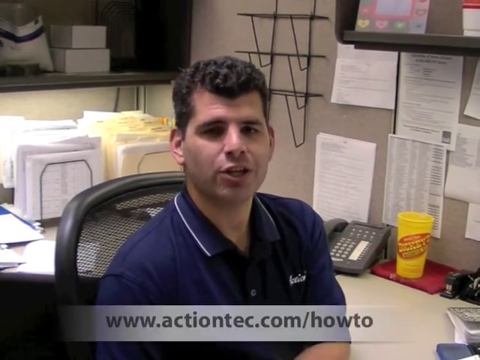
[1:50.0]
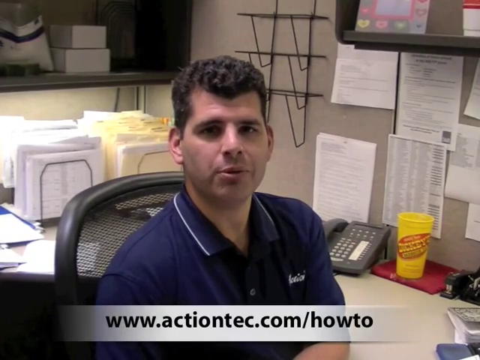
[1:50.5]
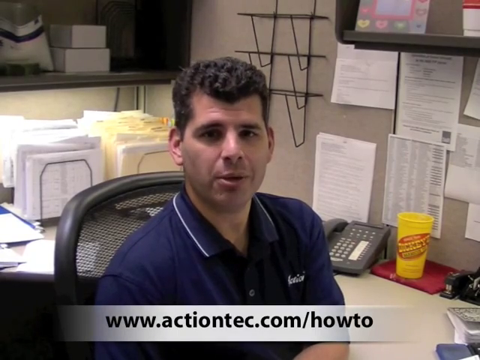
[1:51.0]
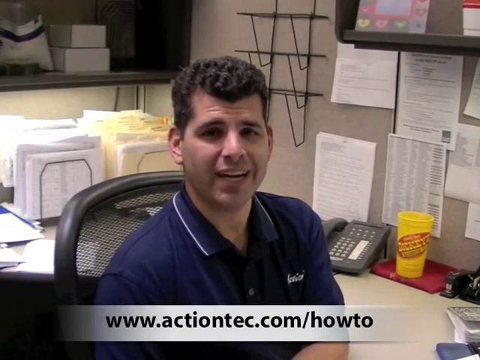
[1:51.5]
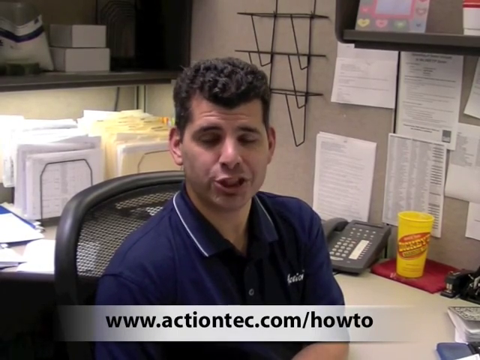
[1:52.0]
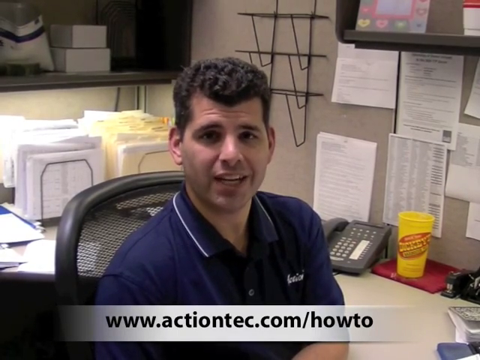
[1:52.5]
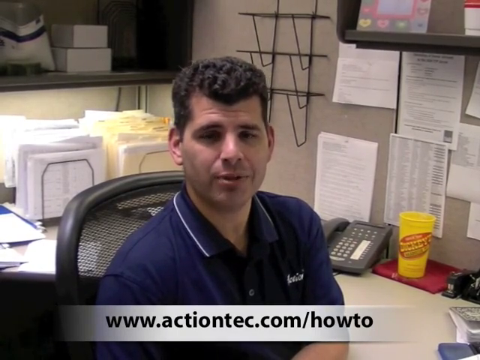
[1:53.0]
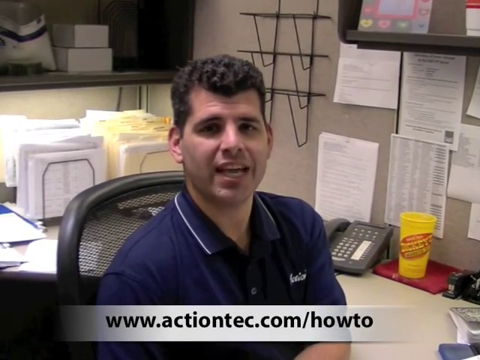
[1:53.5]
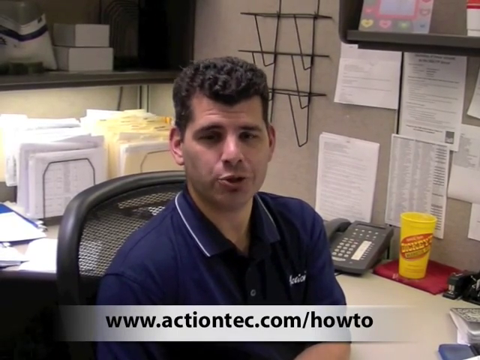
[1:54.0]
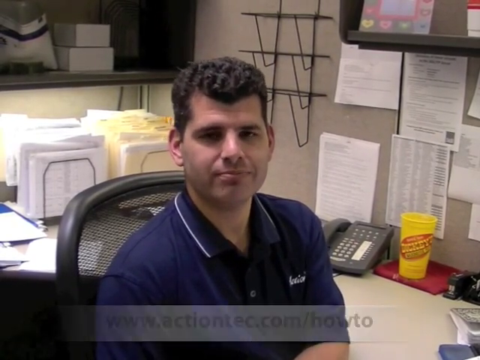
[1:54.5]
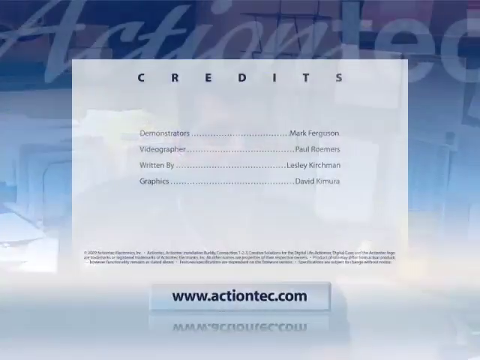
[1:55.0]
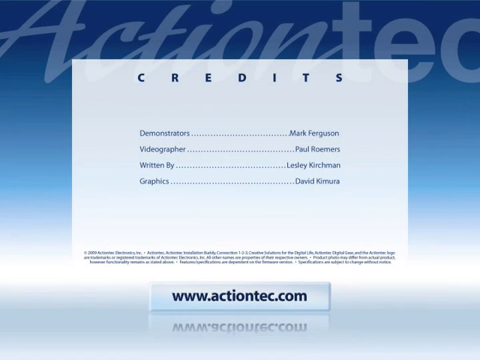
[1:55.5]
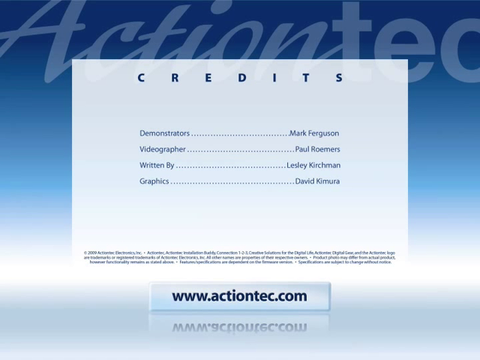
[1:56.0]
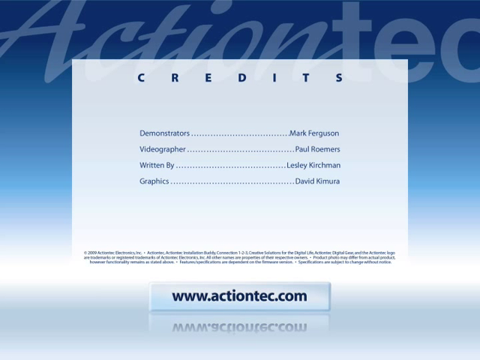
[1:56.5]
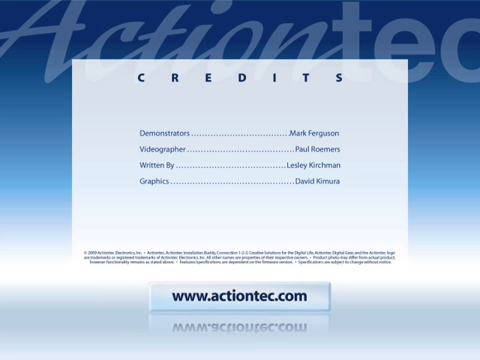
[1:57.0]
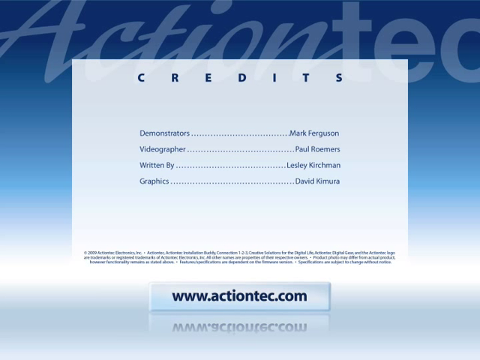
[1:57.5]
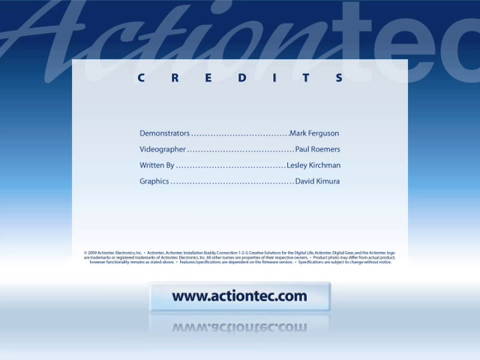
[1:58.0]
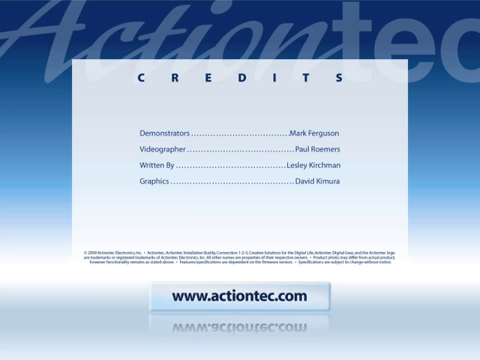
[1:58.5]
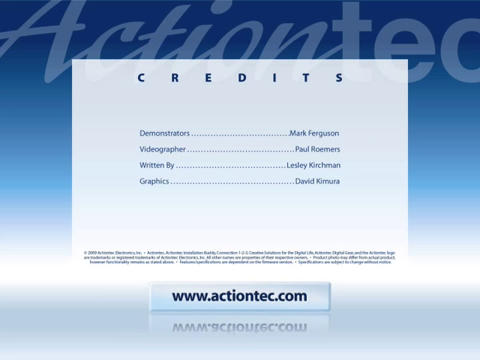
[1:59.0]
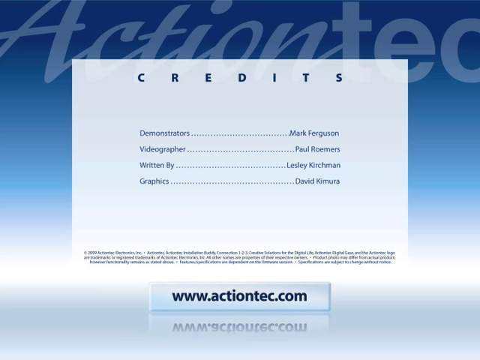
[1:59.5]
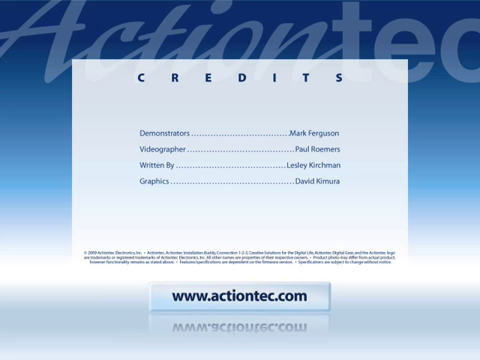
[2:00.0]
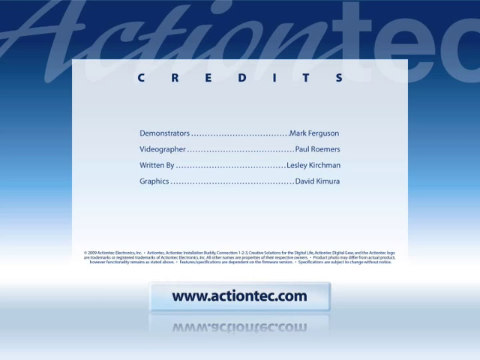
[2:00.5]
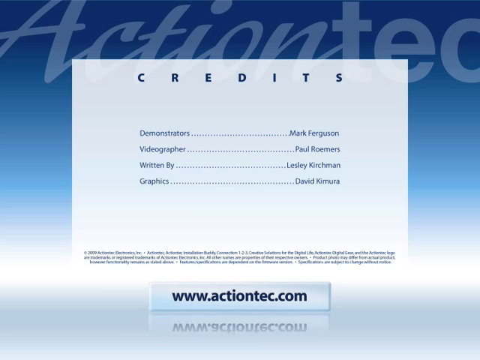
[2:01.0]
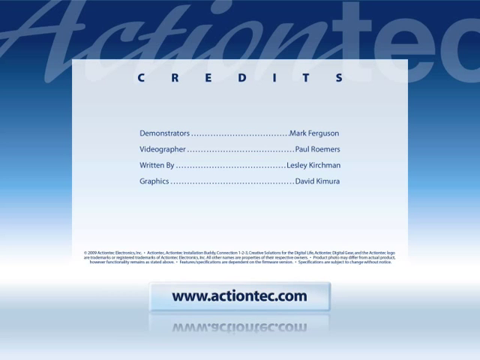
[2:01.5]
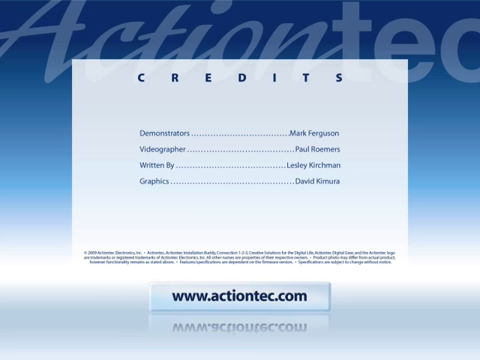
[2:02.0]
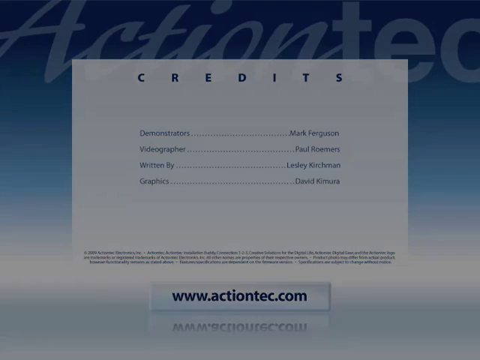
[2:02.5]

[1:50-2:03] The individual is sitting in his dimly lit office area, which possibly looks like the size of a restaurant management office. Paperwork hangs on the wall, and there is a place for folders to hang, some slots empty and some full. The office has a regular, older office-type feel, with items such as a stapler and folders. Credits then appear, listing the demonstrators, the videographer and other information, before fading out.